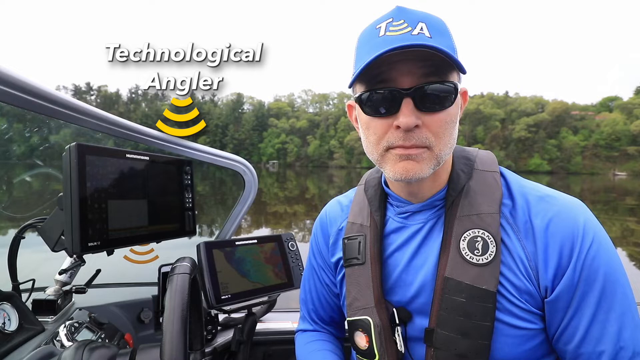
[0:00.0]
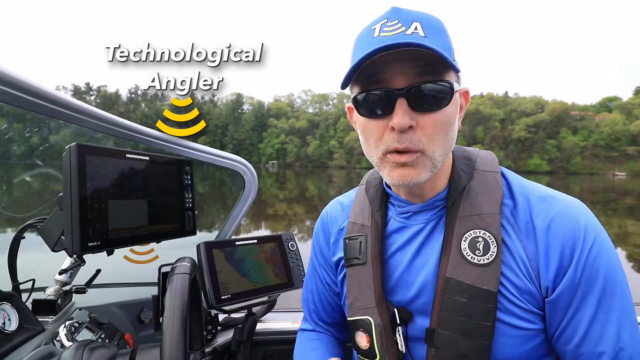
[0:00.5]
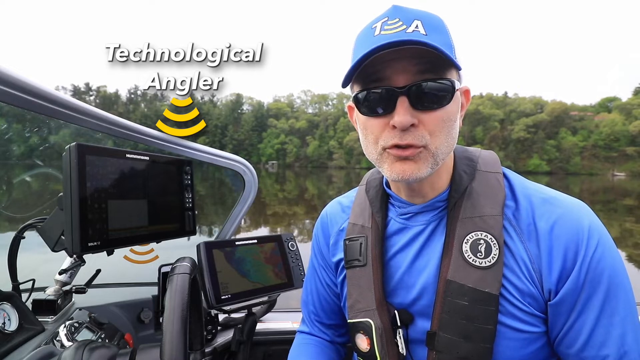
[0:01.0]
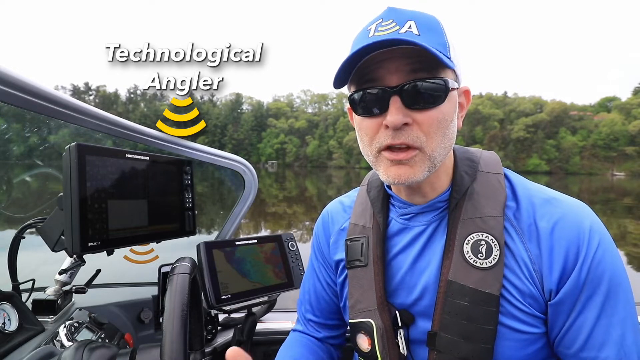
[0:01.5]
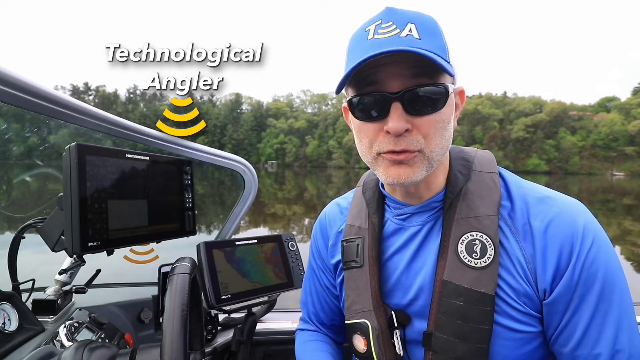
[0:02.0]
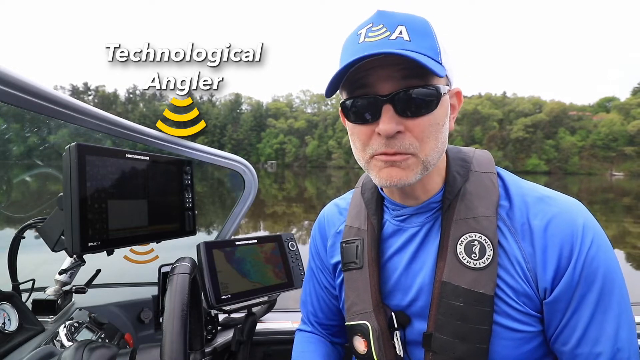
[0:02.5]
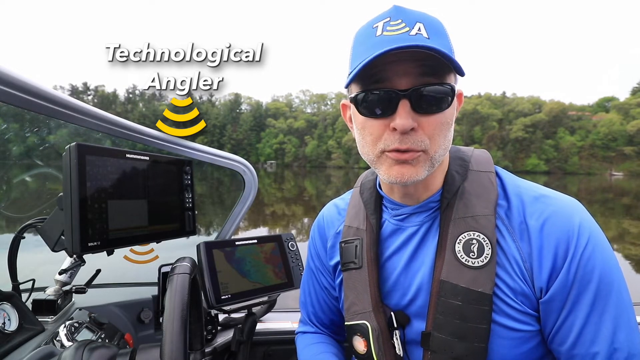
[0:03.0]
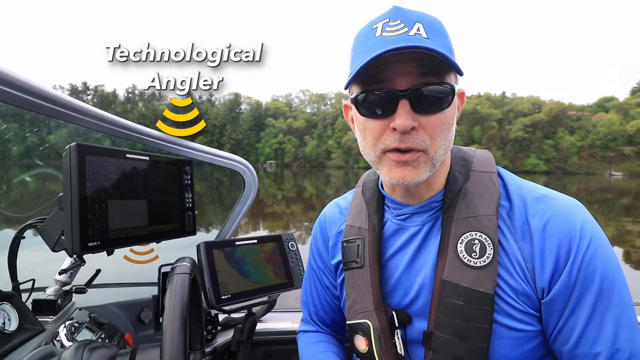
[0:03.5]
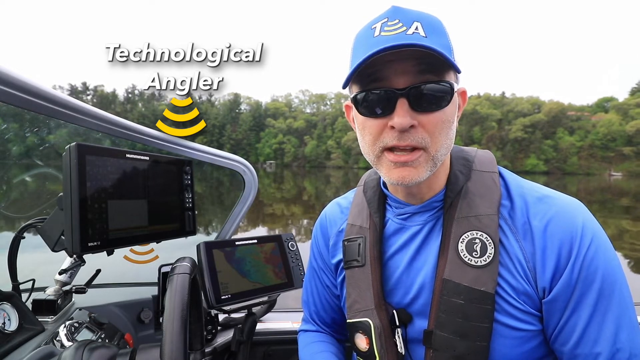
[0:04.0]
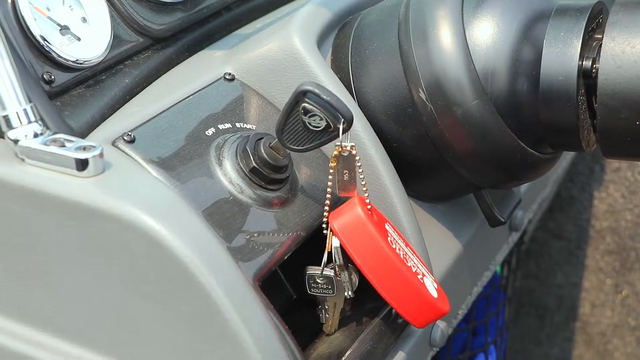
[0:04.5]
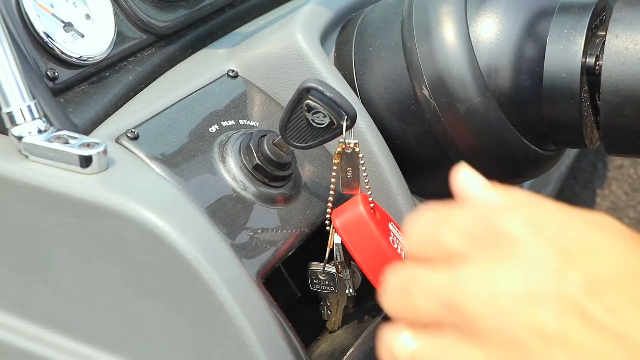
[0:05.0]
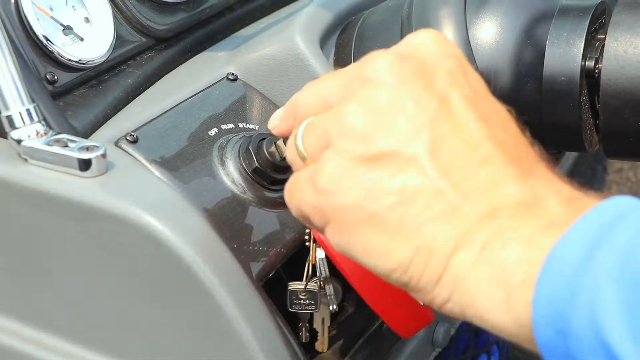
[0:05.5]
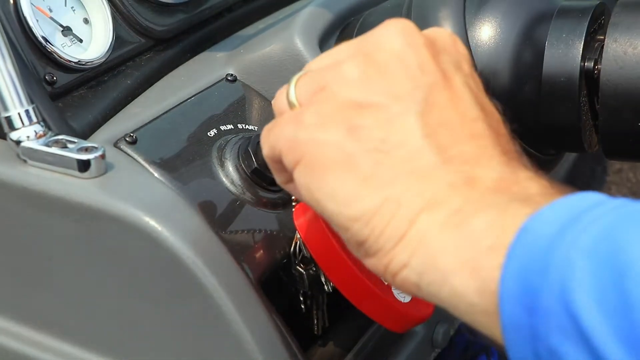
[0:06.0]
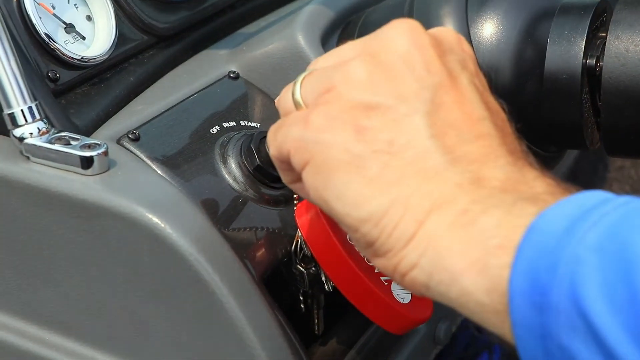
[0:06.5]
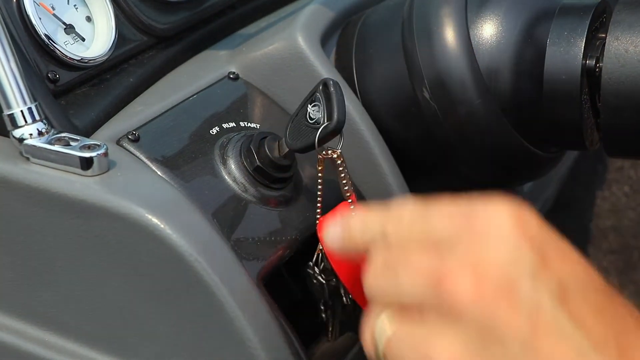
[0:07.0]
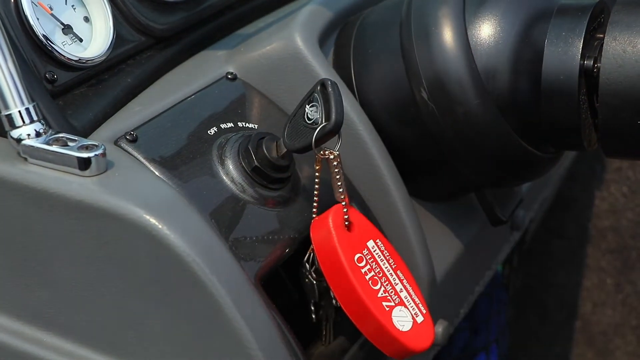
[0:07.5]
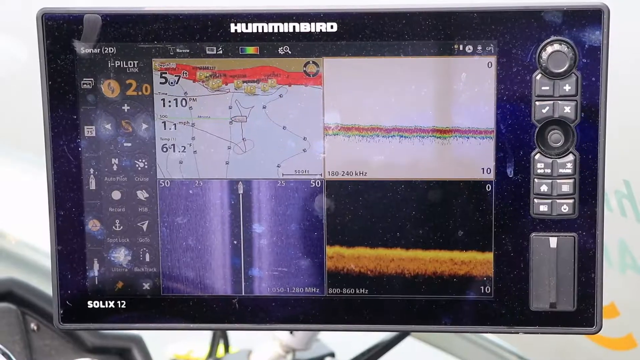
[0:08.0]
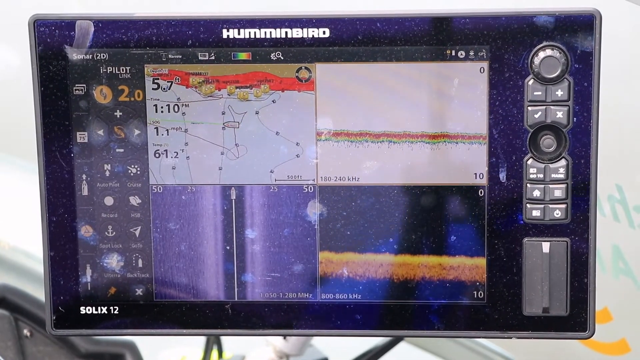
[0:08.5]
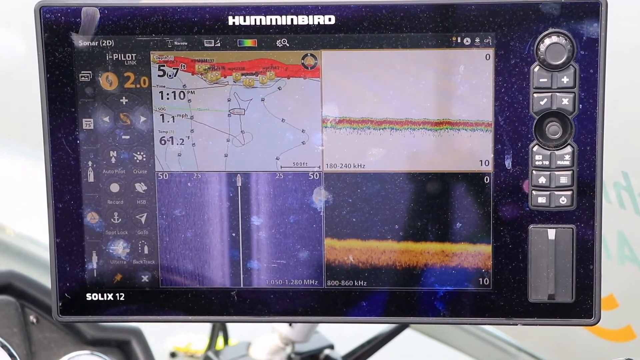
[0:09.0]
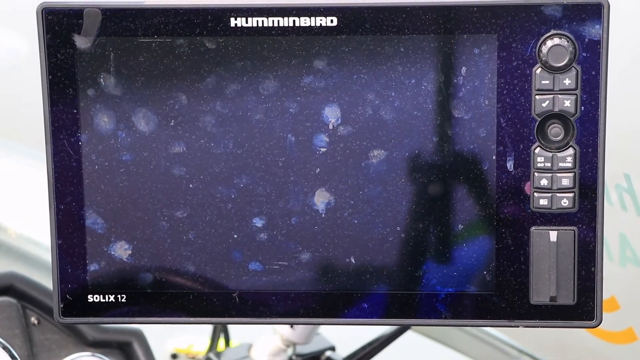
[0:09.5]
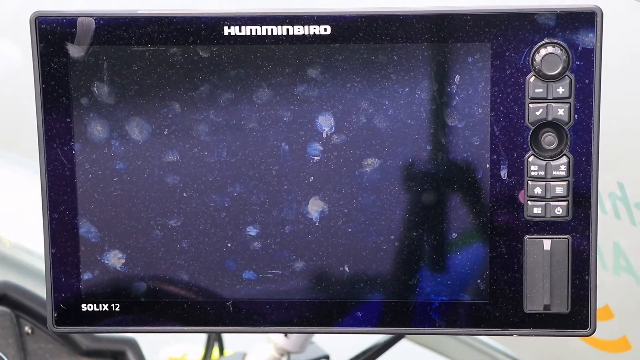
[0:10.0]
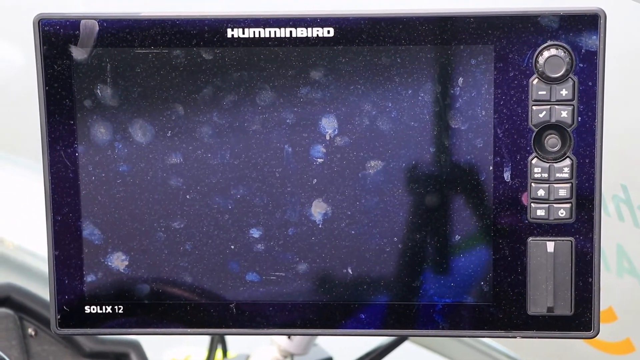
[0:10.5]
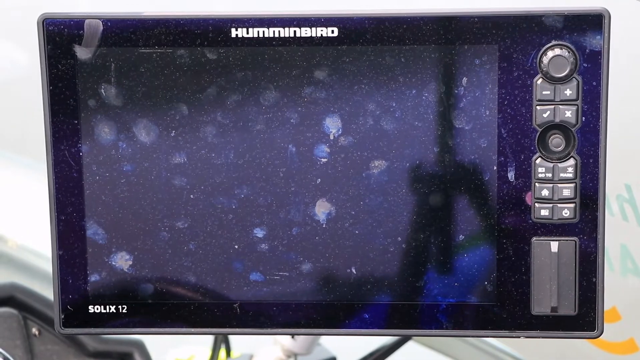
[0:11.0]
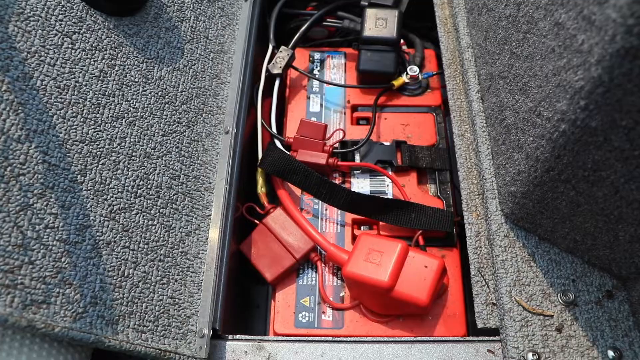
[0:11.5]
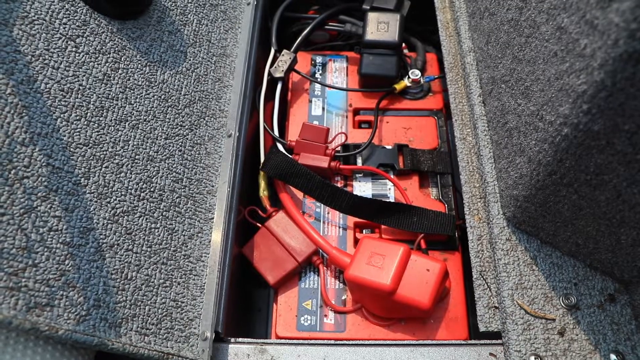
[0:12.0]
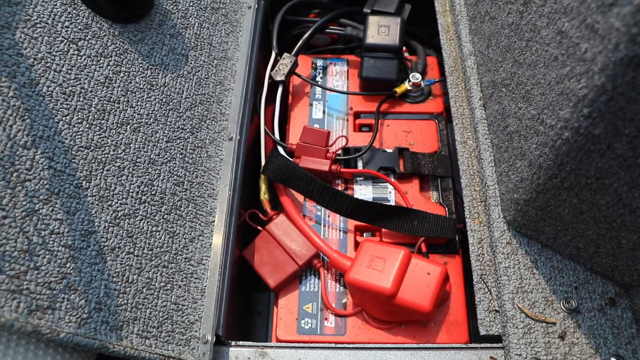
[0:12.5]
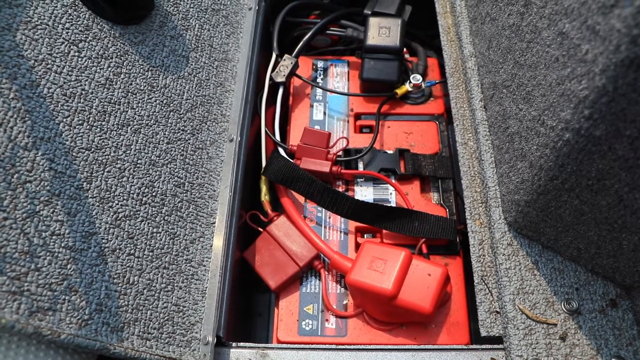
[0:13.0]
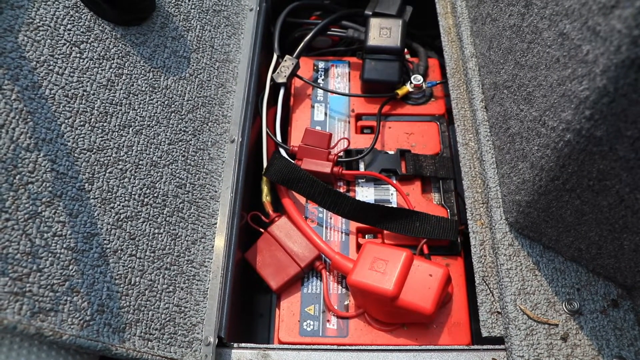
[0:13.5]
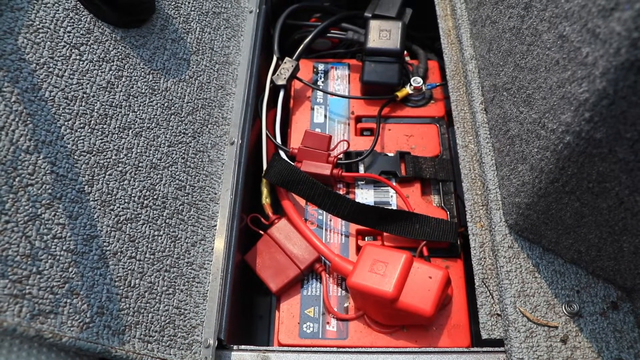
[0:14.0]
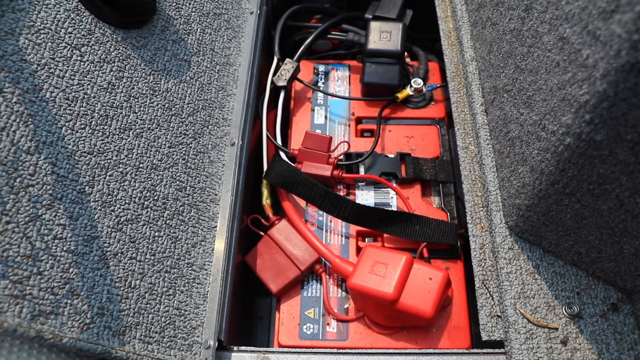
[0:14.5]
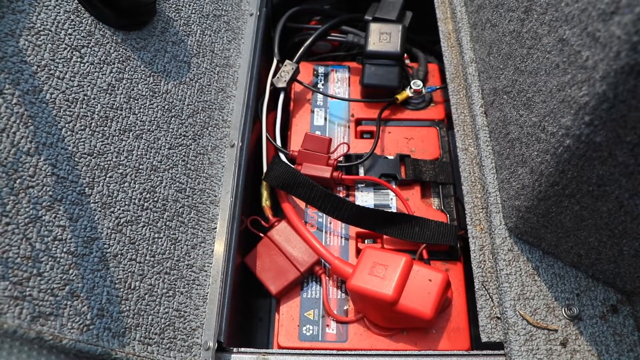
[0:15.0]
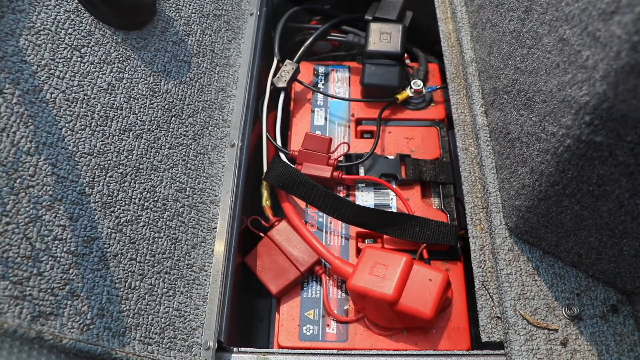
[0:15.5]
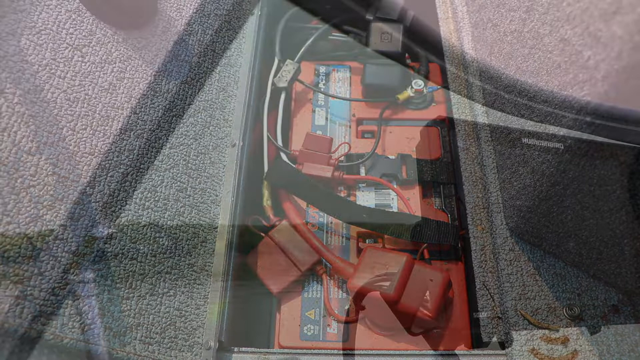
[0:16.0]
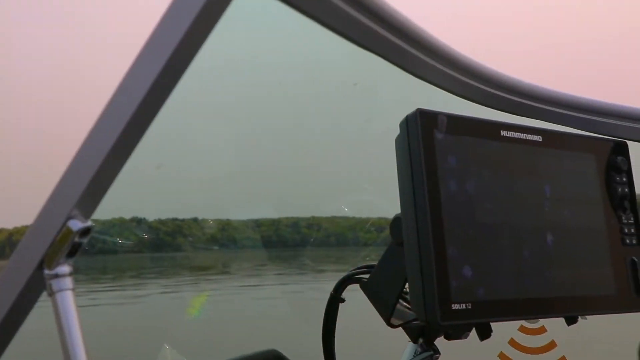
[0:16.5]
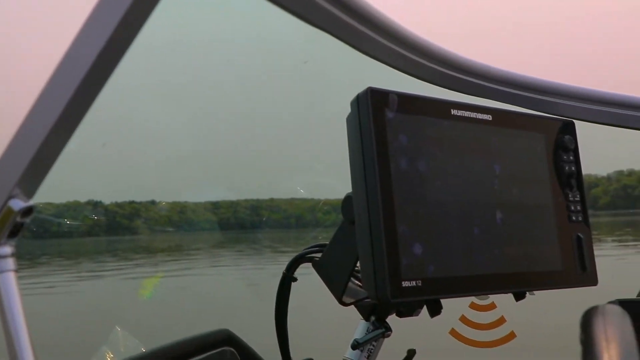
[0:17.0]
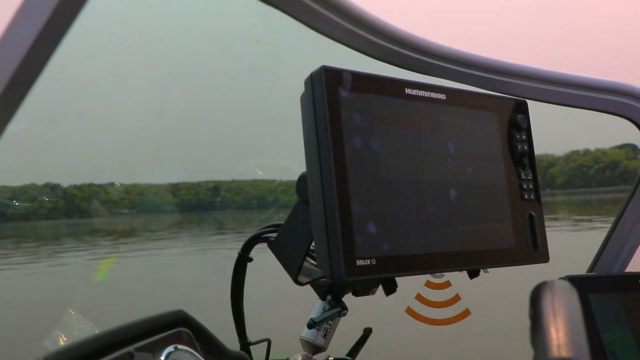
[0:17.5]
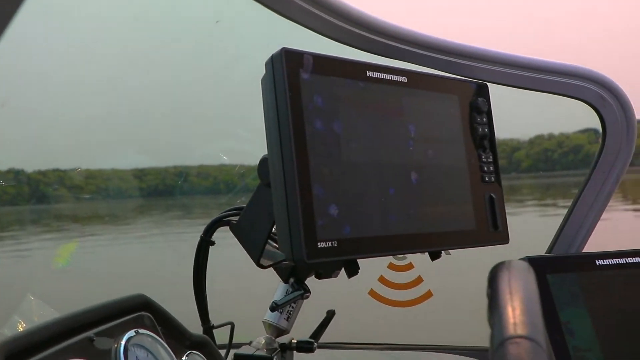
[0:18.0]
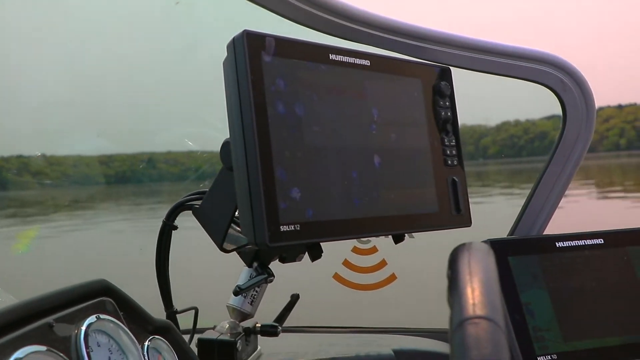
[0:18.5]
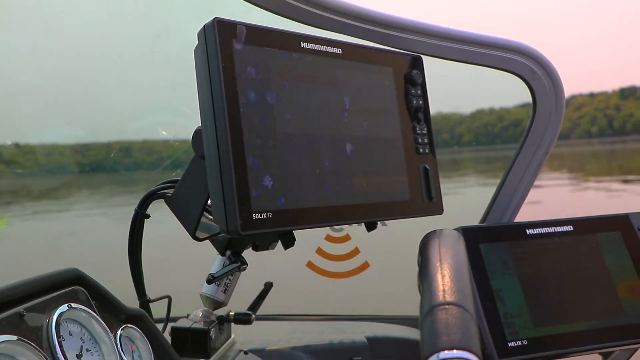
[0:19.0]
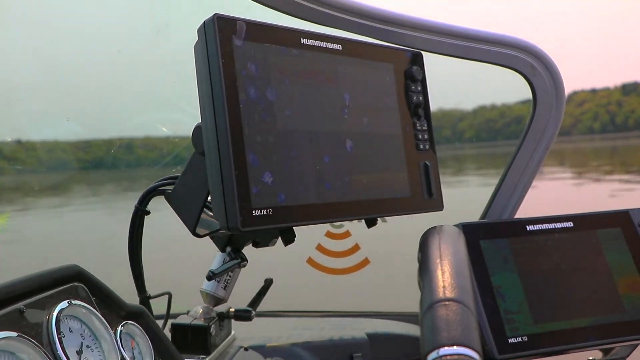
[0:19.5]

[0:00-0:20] Outdoors, a man sits inside a boat. Boat equipment, gauges and panels are visible on the left side, along with the top of the windshield and the windshield itself on the left. He wears a blue baseball cap, a blue long-sleeved shirt and what appears to be some sort of black harness. In the upper left corner, text reads "technological angler". His hat has a T and an A with a sound wave signal in the center between them. He wears black dark shades, and only his midsection and up are visible. He speaks, sort of gesturing and tilting his head to the right. The video cuts to a shot of the ignition and keys, where he uses his left hand, which has a wedding band on the ring finger, to turn the key in the ignition to the start position. The next shot shows a Hummingbird display with several screens of information within the one screen and an instrument panel of buttons on the right. Then the video cuts to a shot of the battery inside the boat, down in the floorboard area.